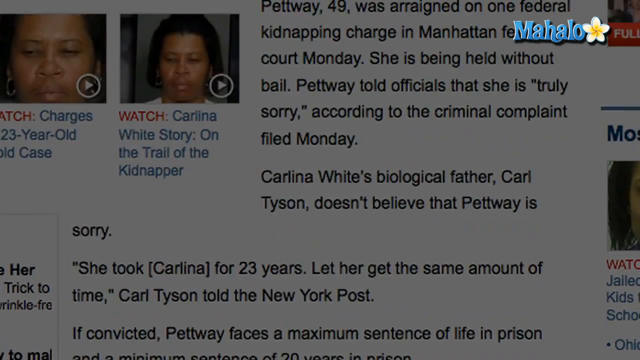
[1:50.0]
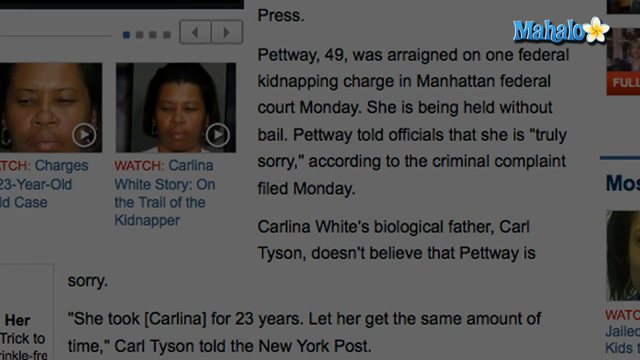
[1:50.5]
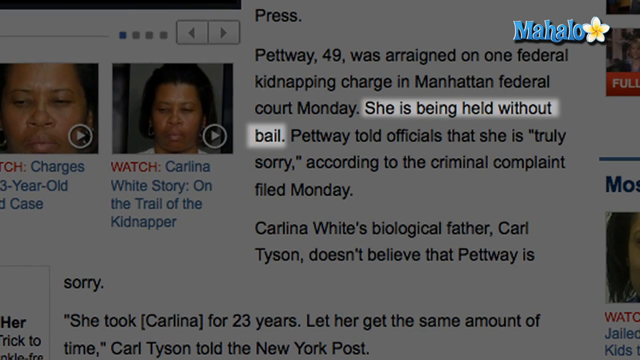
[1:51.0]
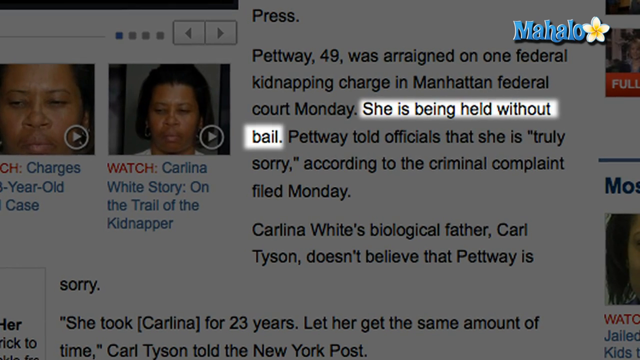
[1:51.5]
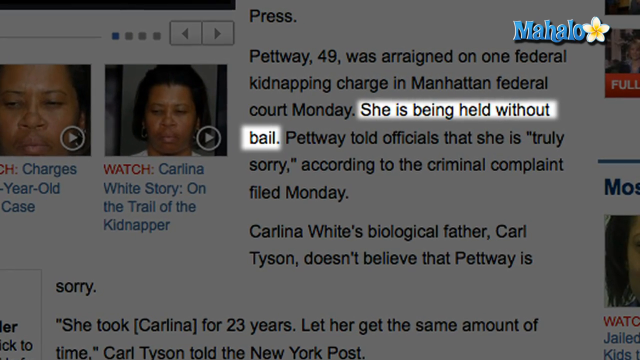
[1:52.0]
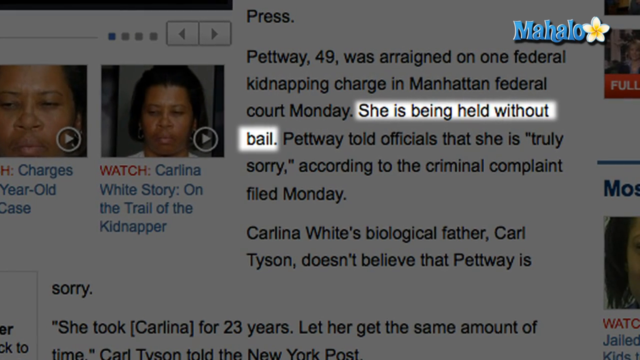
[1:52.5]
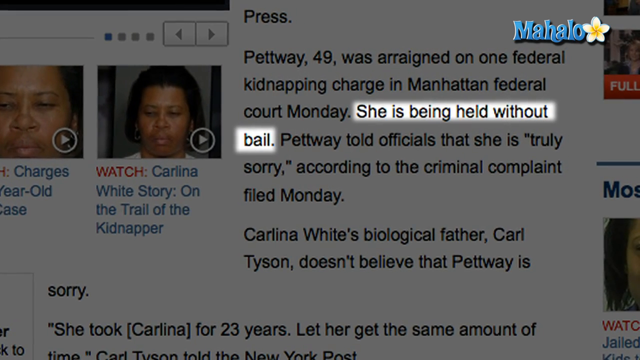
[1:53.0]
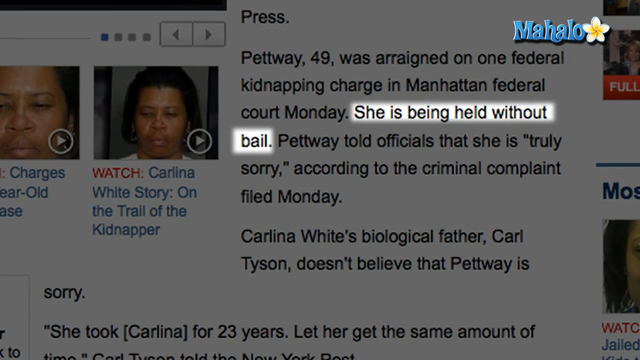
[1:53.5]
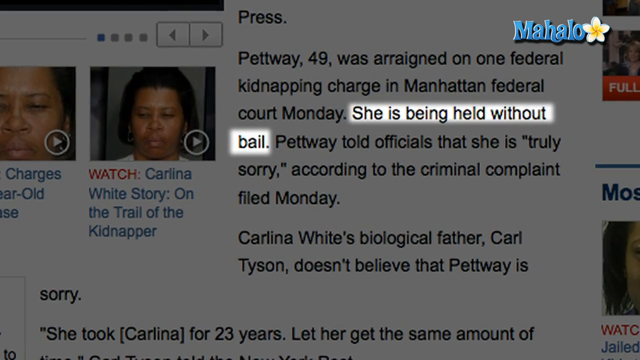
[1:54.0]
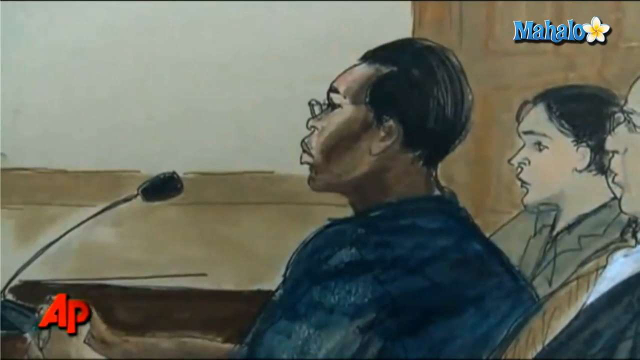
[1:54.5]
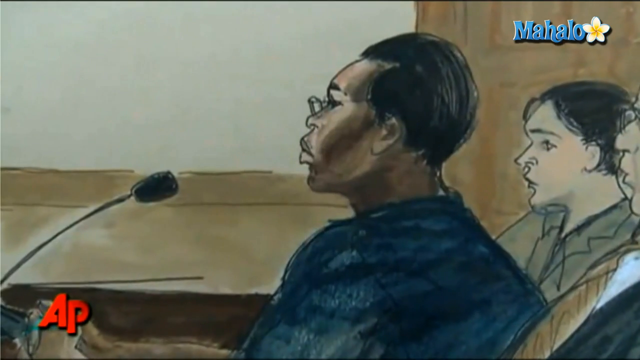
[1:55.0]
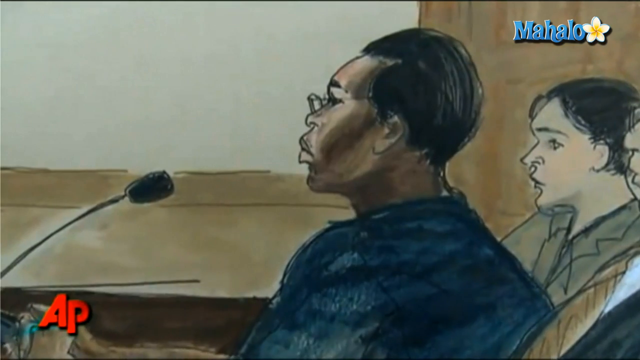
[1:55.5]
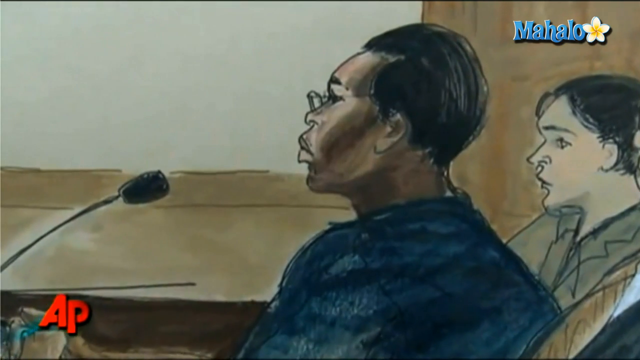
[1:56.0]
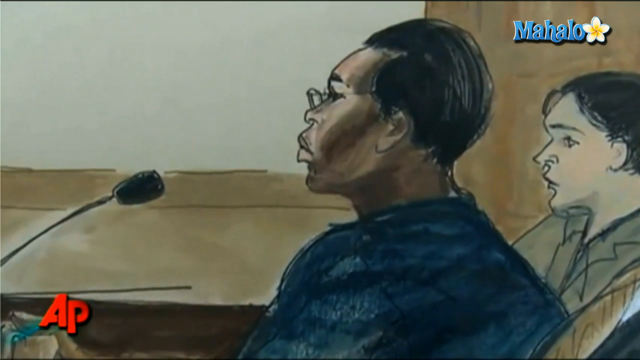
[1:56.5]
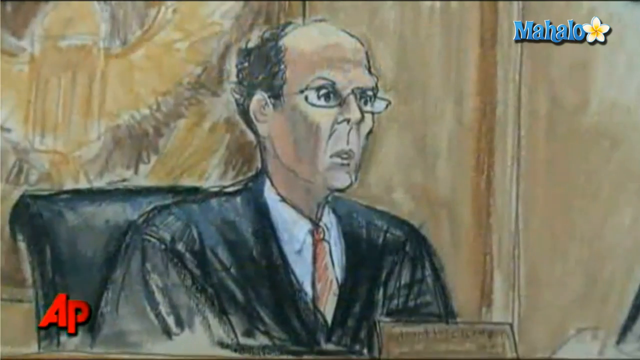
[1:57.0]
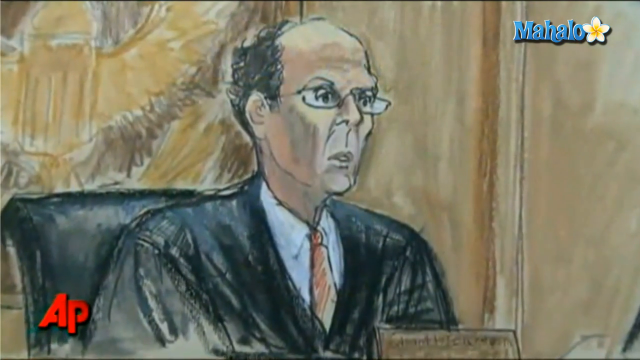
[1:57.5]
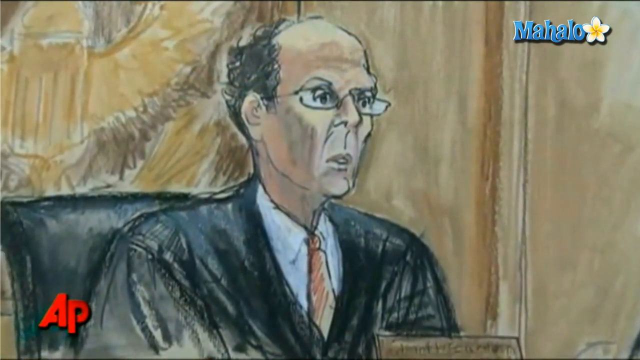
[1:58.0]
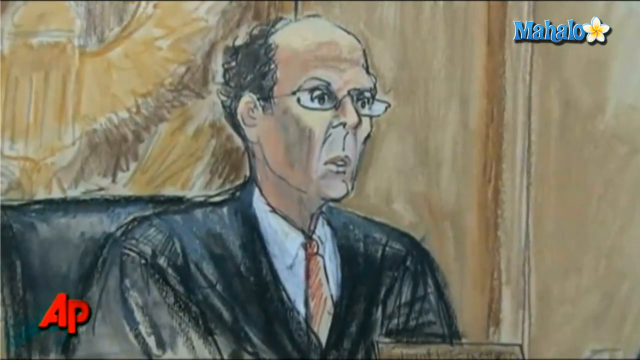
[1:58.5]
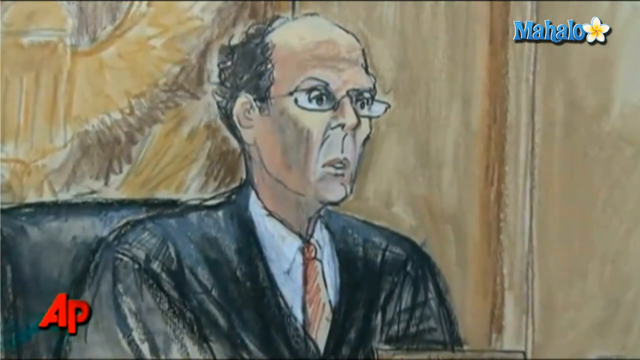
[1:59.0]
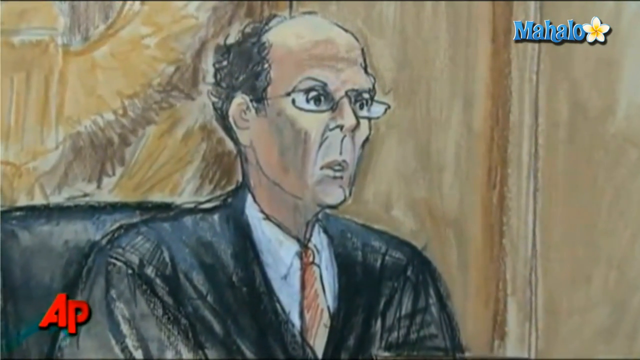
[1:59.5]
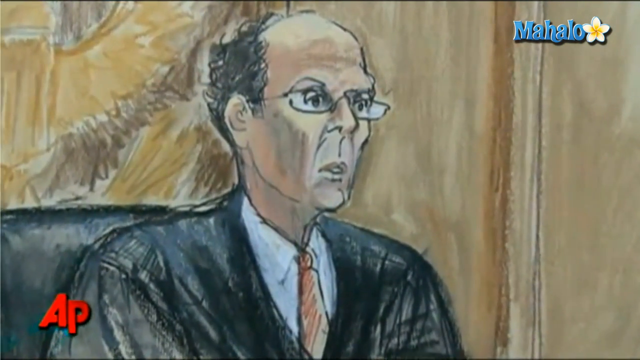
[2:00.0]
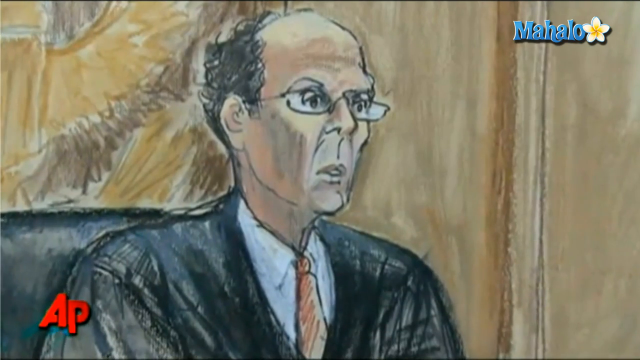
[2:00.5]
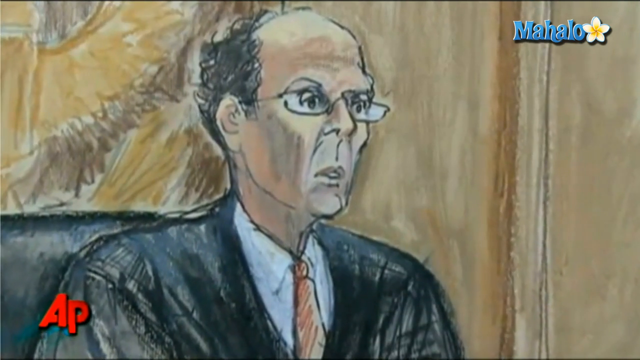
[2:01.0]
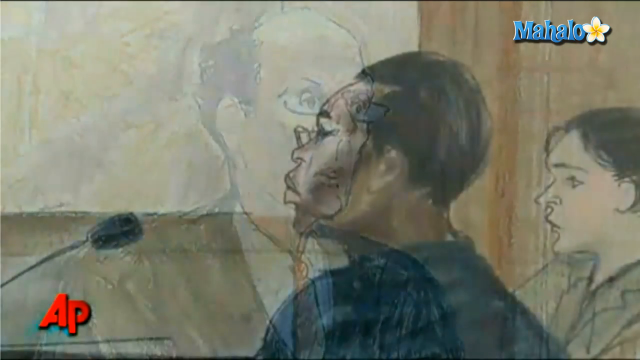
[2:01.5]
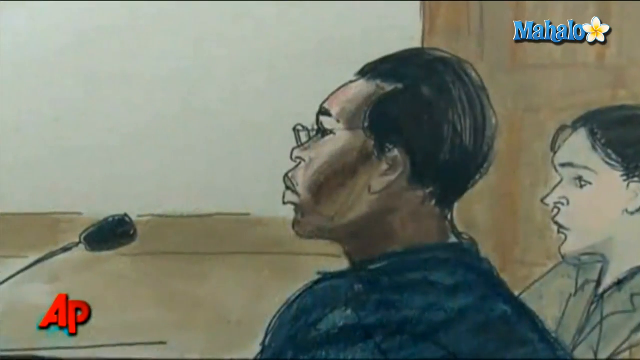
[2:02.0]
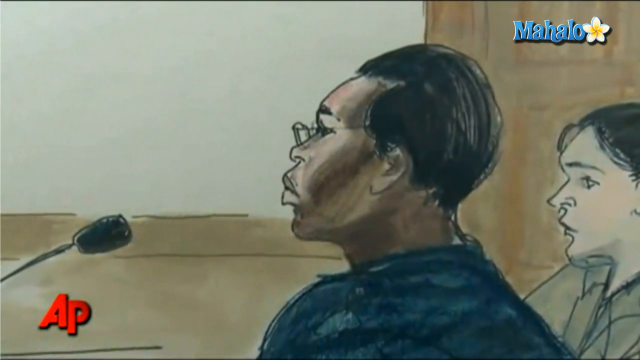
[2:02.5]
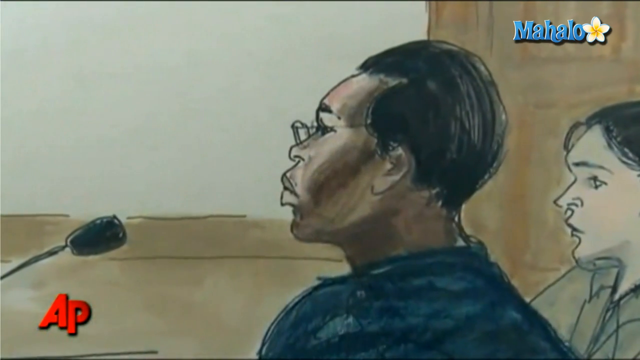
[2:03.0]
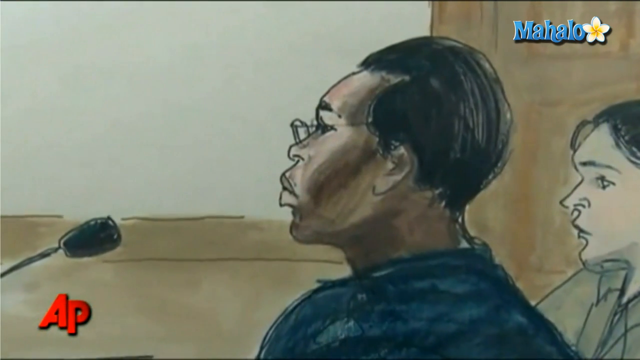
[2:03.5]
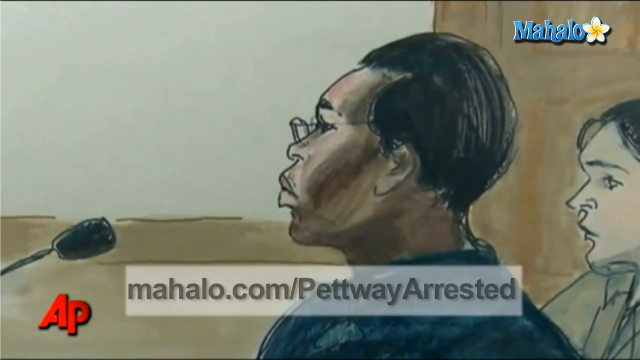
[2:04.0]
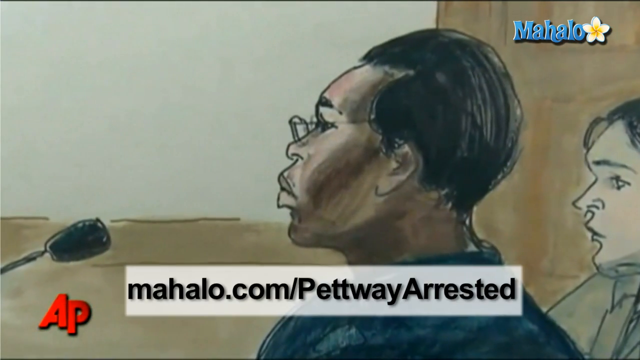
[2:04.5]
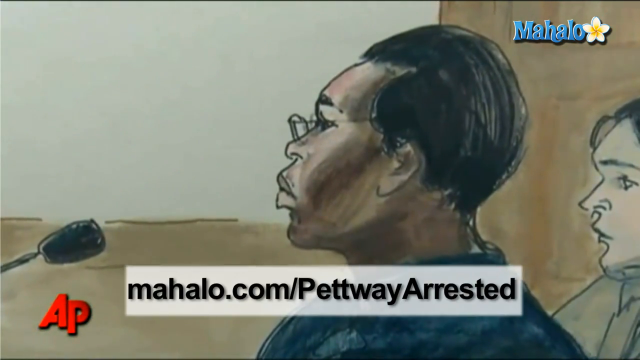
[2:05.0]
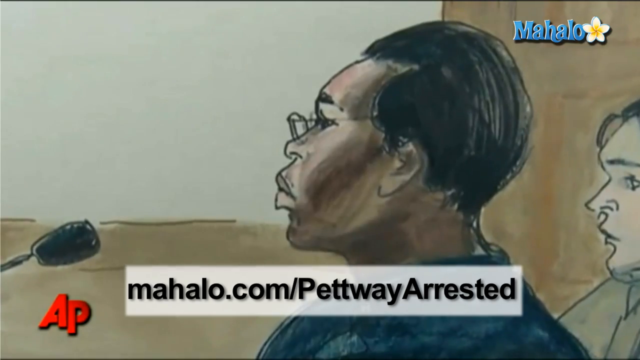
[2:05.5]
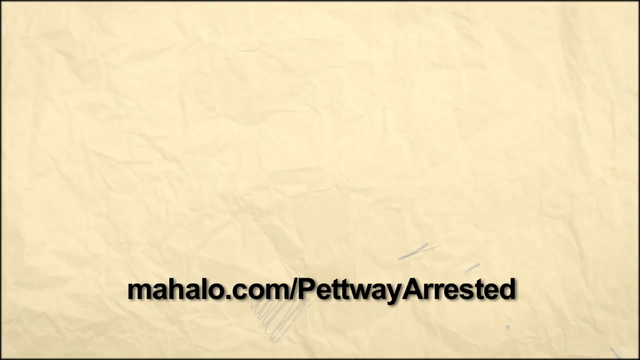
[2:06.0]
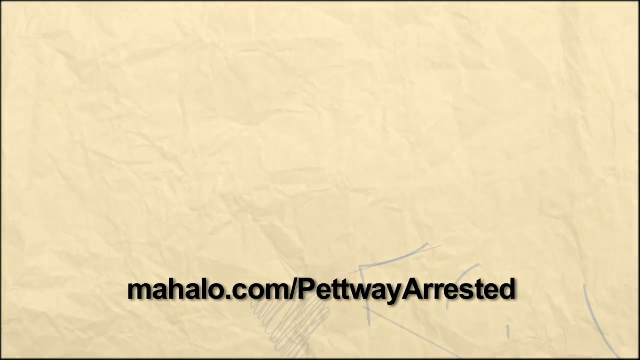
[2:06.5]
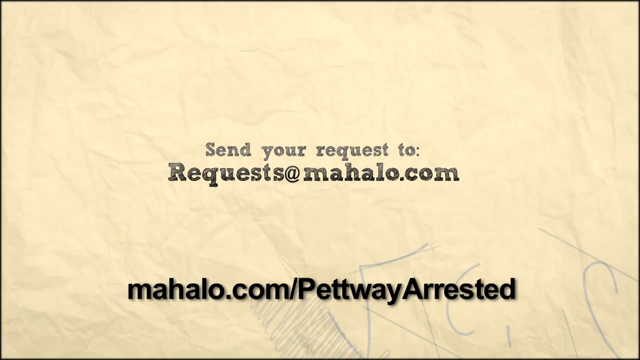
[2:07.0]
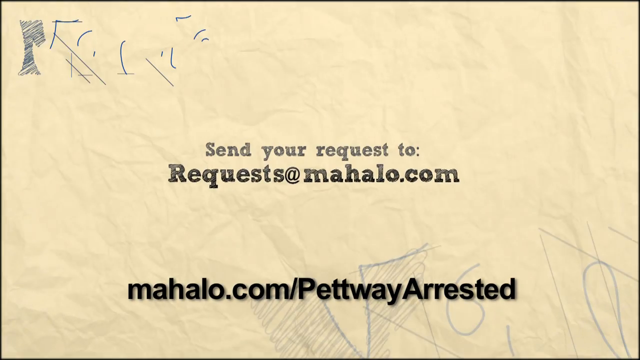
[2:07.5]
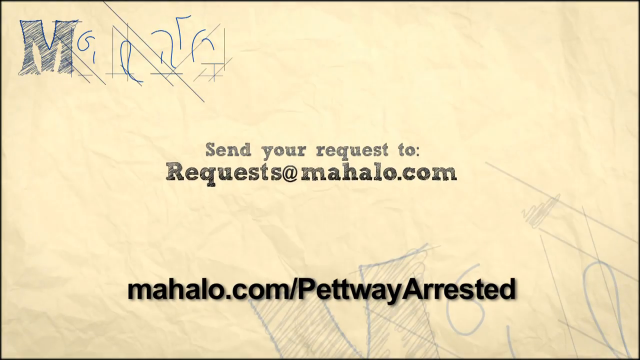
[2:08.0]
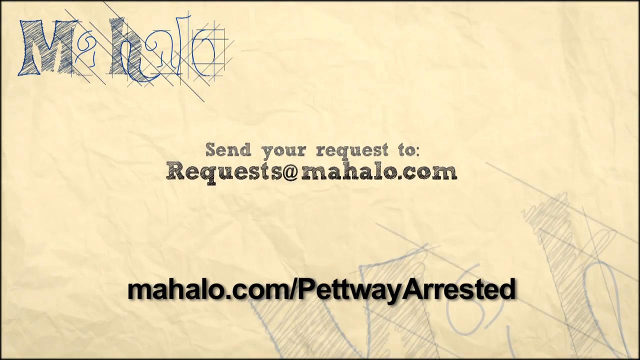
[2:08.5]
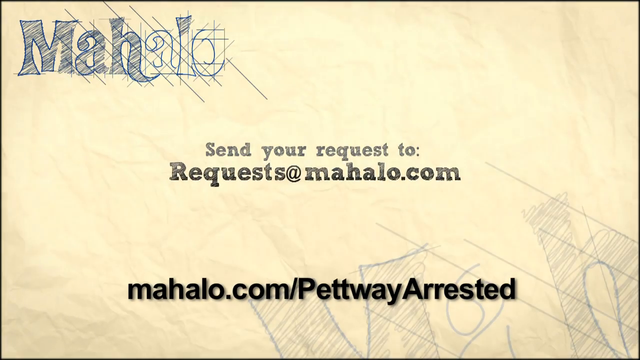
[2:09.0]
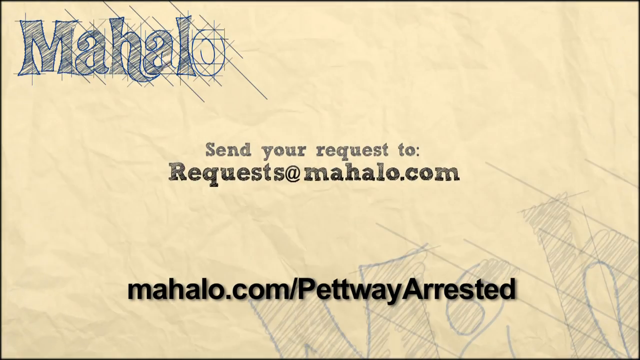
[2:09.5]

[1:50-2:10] A screenshot of a news article has a gray overlay over most of the screen, except for highlighted text with a white background reading "she is being held without bail", in black text. To the left of the column of text is a photo of the woman, Pettway. The scene shifts to a courtroom sketch: in the center is an African-American person wearing eyeglasses, looking to the left, with a microphone to their left and two other people to their right. The next slide shows a man looking to the right of the screen, possibly the judge, wearing dark robes, a white shirt, a tie and eyeglasses. The scene shifts back to the first courtroom sketch, and text appears at the bottom reading "mahalo.com/petway arrested".